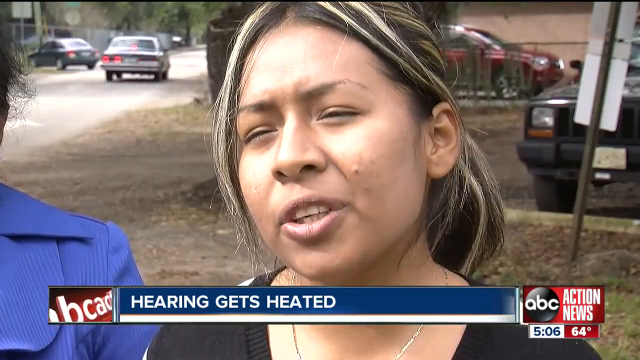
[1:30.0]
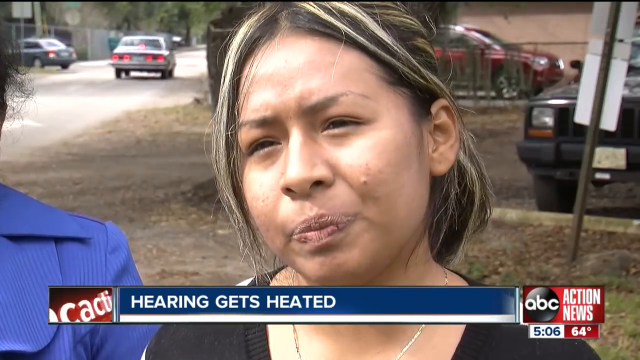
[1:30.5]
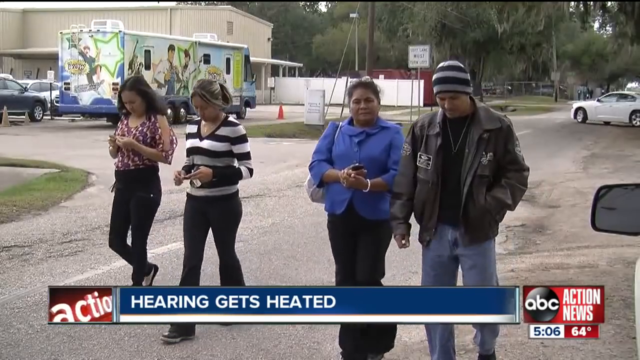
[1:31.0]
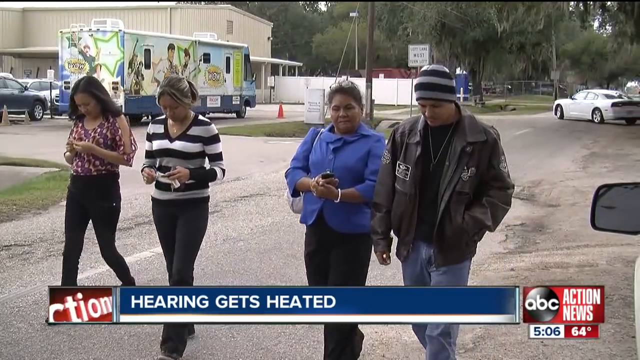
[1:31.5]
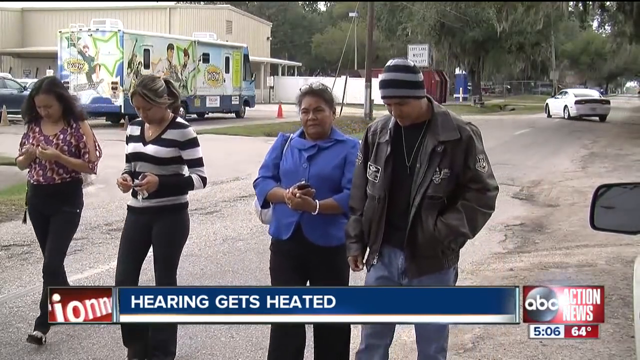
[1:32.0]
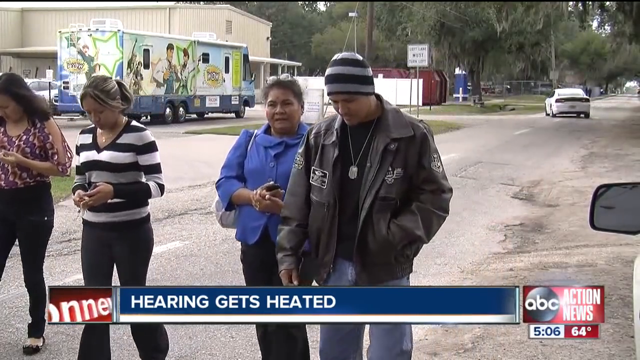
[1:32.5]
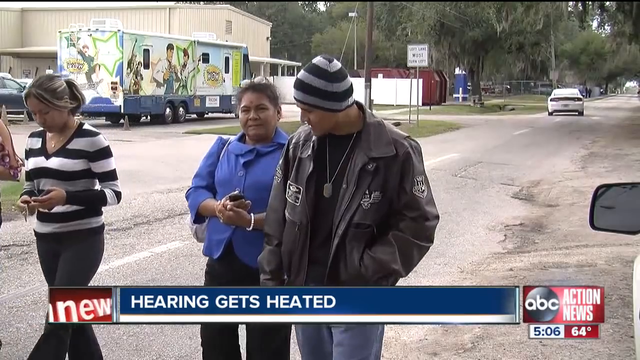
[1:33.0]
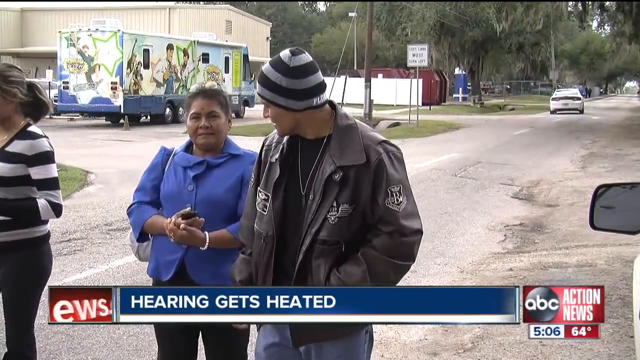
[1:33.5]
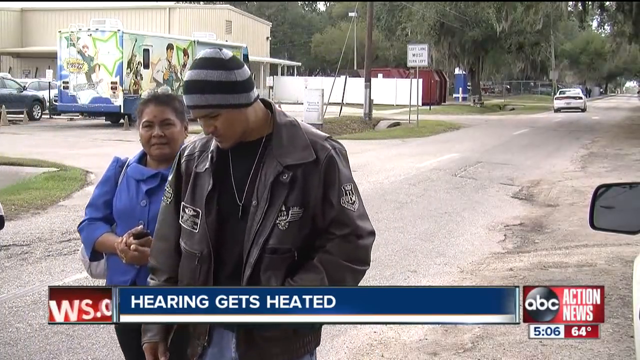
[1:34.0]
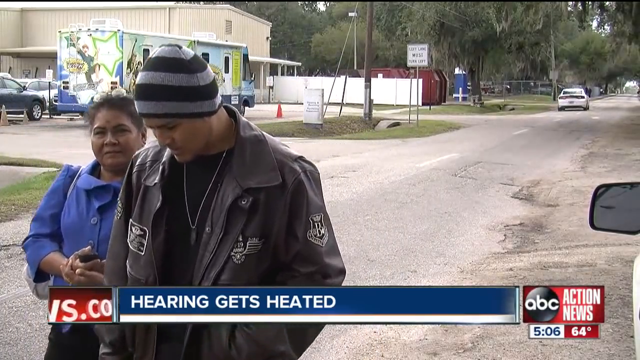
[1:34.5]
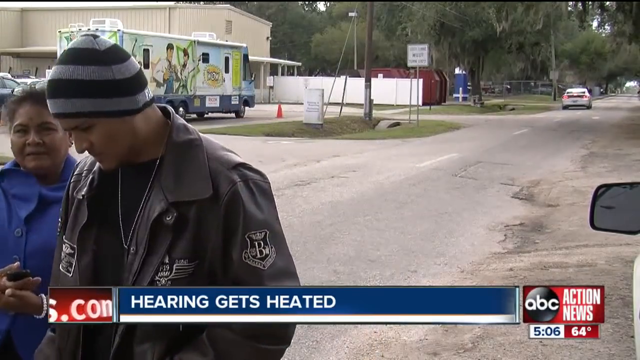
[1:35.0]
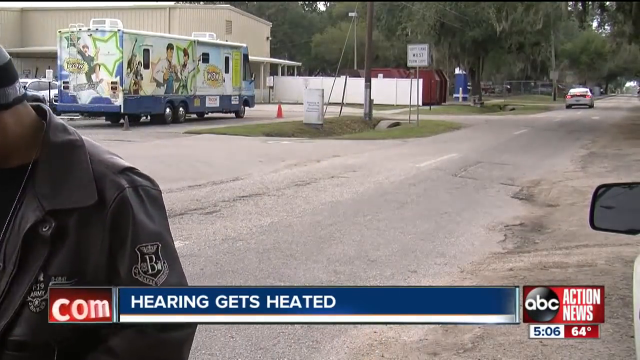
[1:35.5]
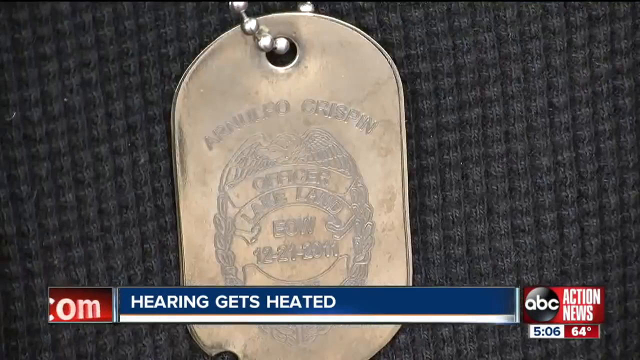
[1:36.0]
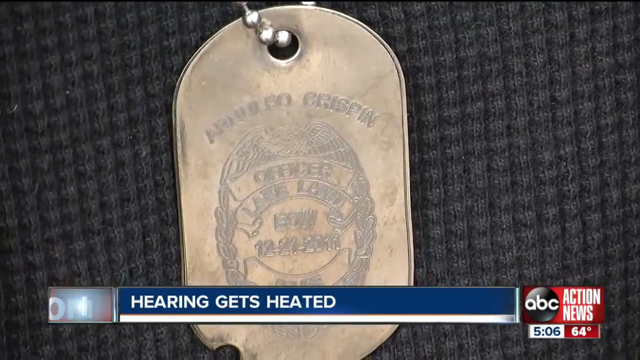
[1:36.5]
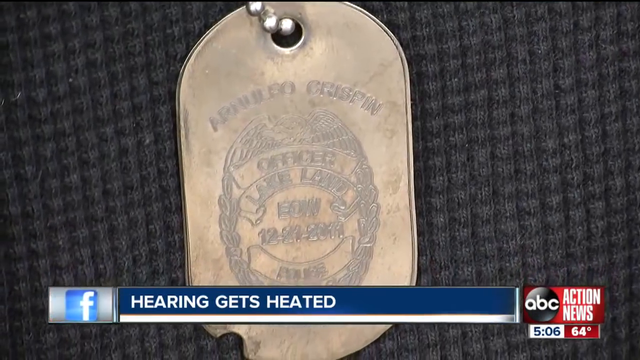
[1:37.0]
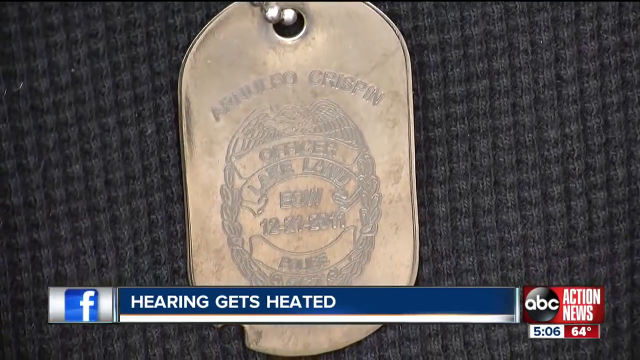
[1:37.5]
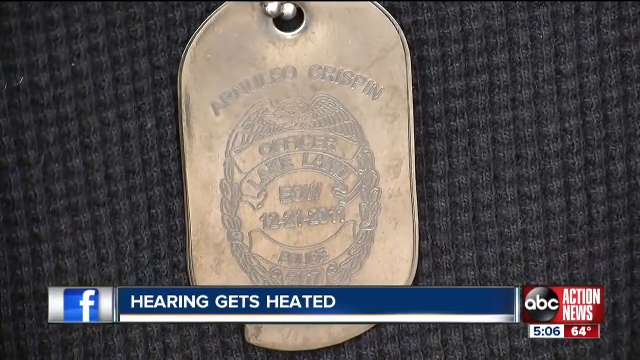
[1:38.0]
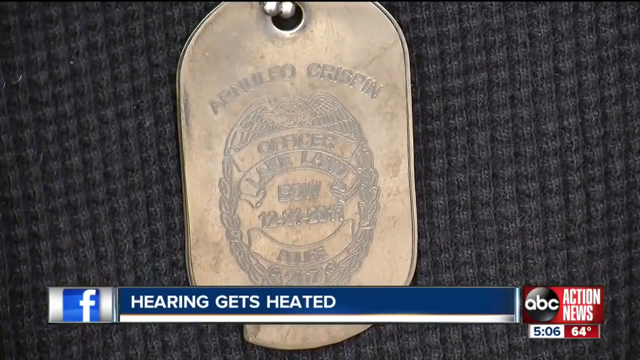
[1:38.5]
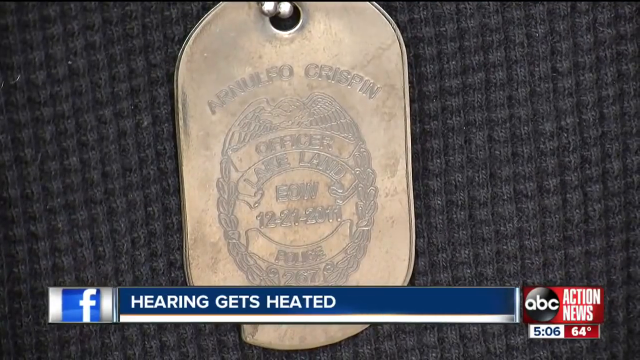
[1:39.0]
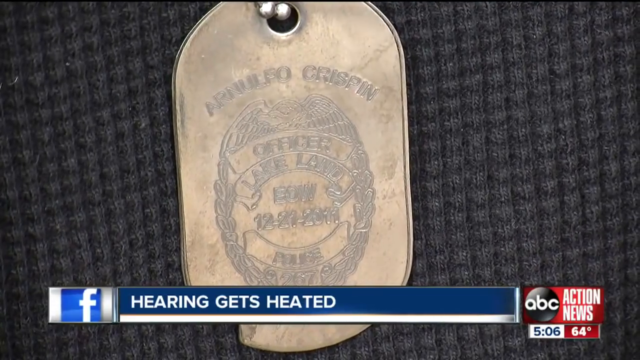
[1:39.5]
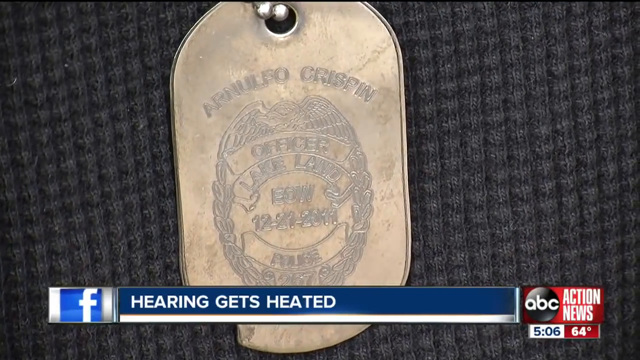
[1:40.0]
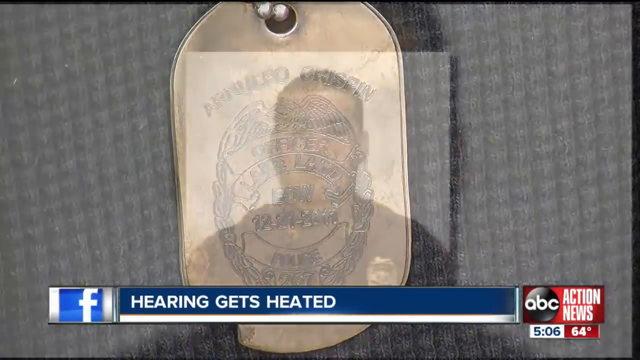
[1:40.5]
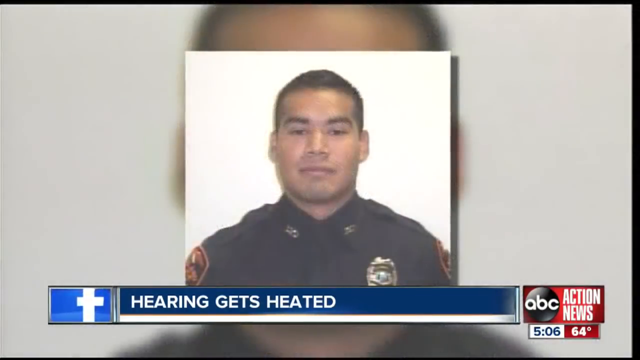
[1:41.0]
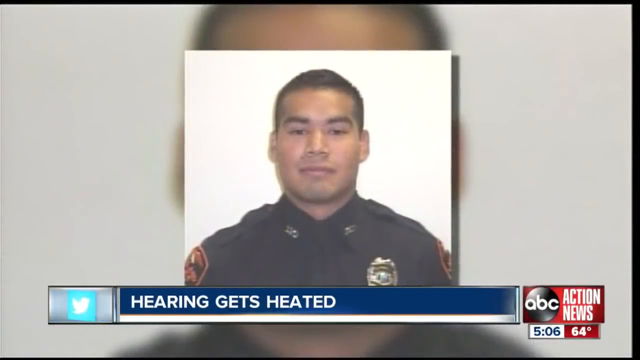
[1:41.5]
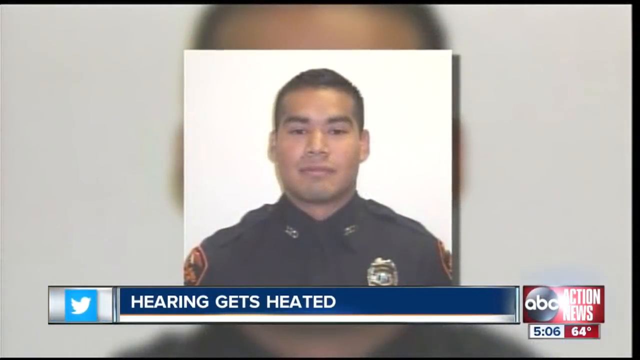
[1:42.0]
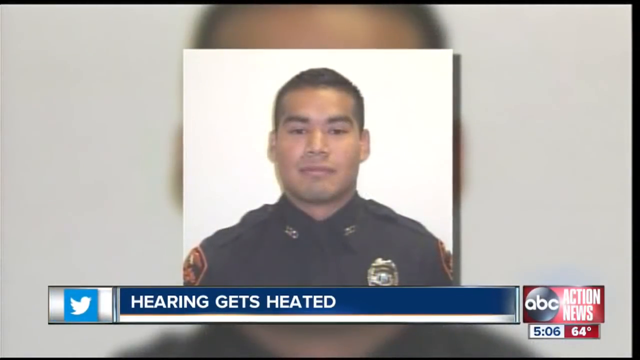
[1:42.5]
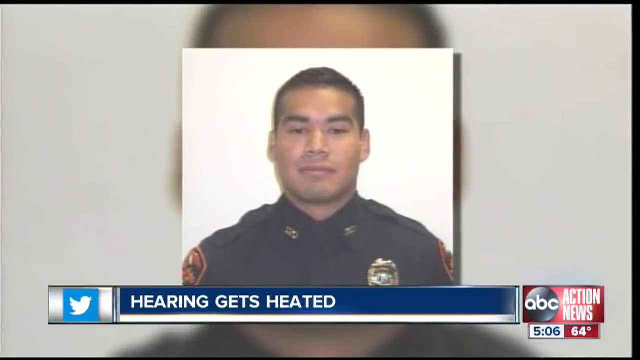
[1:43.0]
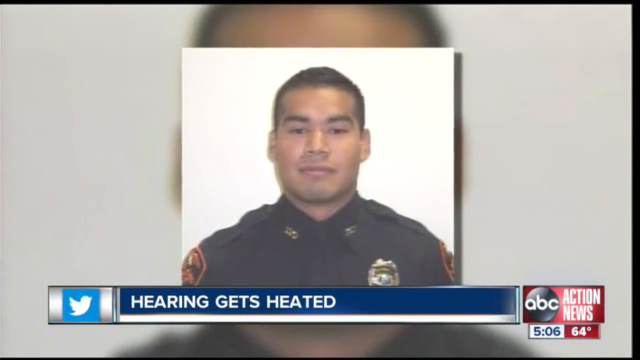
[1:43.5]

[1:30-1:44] The younger woman with short blonde and brown hair is shown, still talking. The scene then shows her walking with other people. On the left side of the group is this woman in the black and white shirt, wearing long black pants. To her left is another younger woman with long dark hair, wearing black pants and a purple and orange shirt. On the right side are a woman and a man: the woman is the older lady in the blue dress, wearing black pants and carrying a purse, and to her right is a man in the gray and black beanie and the brown coat. They all seem to be walking together off camera. Among them, a car that looks like a police officer's is pulling away. Next, a hanging tag of some sort, like a dog tag, is shown; it says "Officer Lakeland EDW" and shows the date. It is apparently the tag of the officer who was killed. A picture of the officer is then shown: he has dark brown skin and short brown hair and wears a police uniform with a badge on the front, against an all-white background.